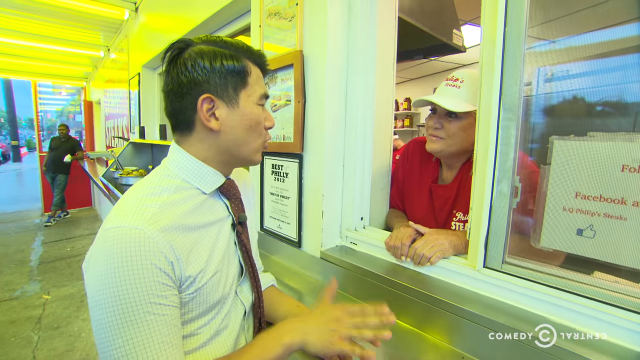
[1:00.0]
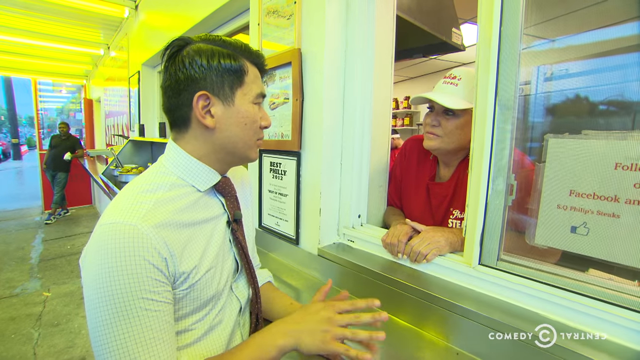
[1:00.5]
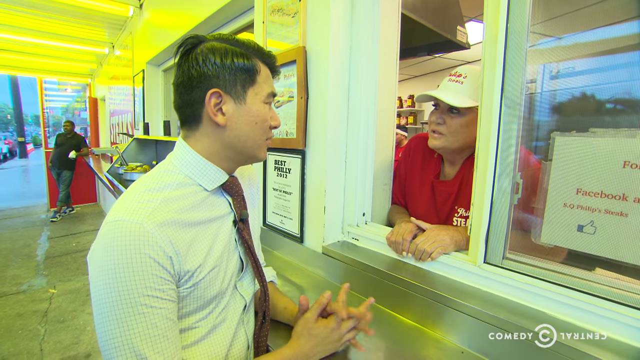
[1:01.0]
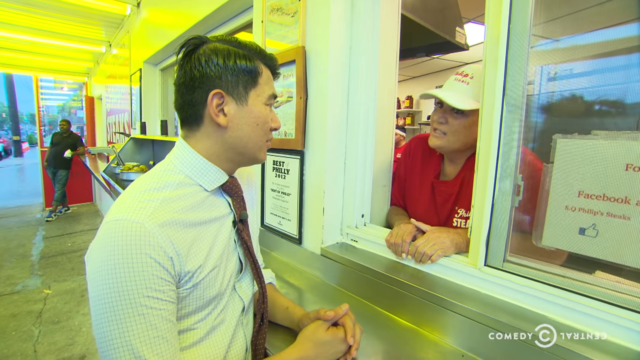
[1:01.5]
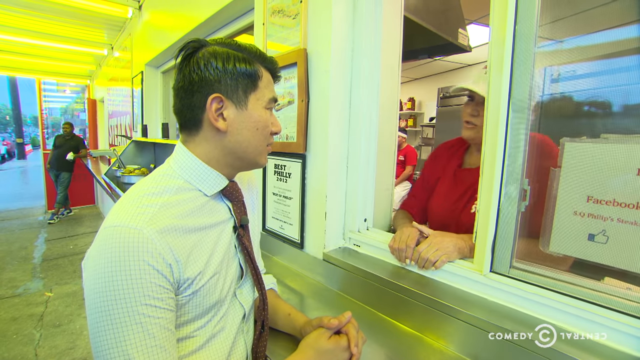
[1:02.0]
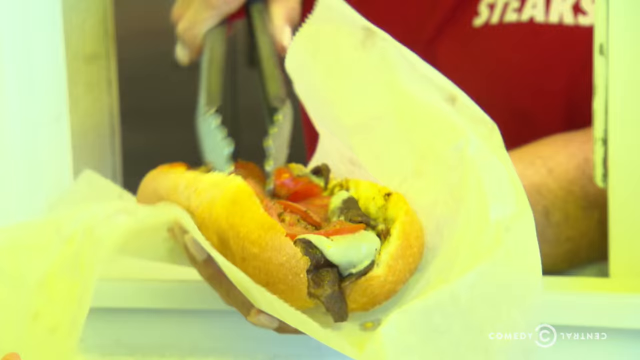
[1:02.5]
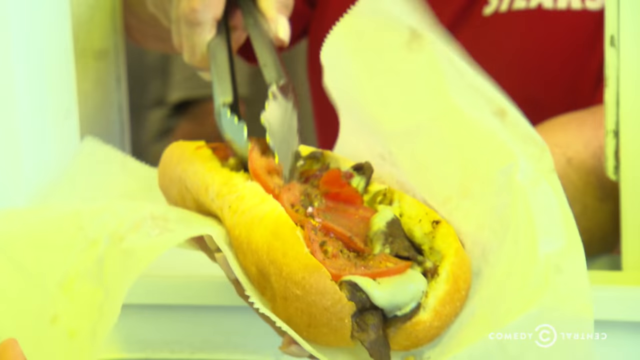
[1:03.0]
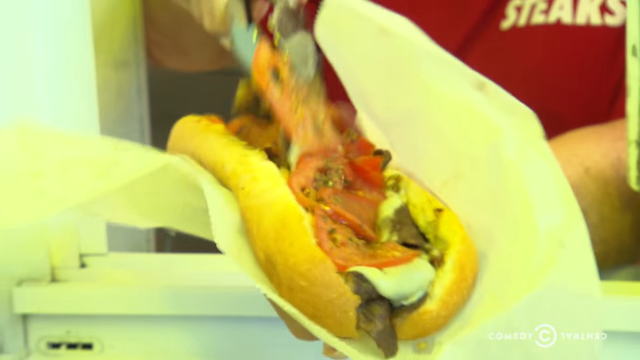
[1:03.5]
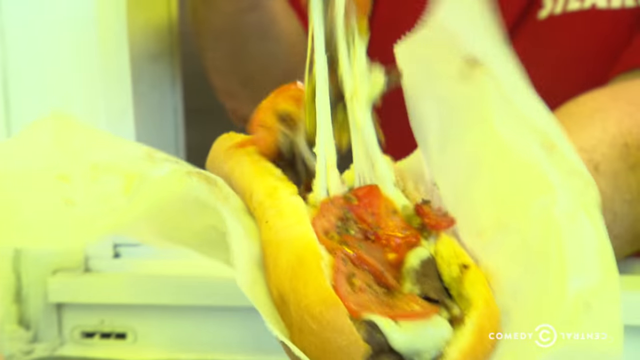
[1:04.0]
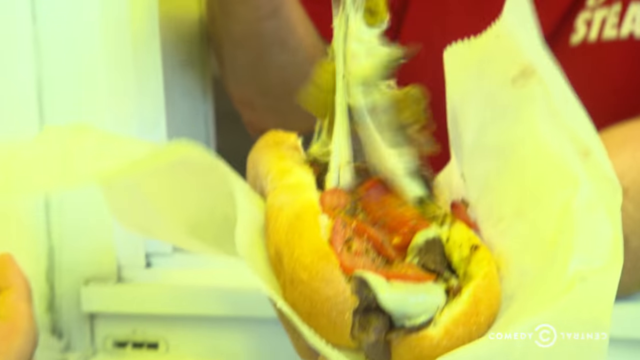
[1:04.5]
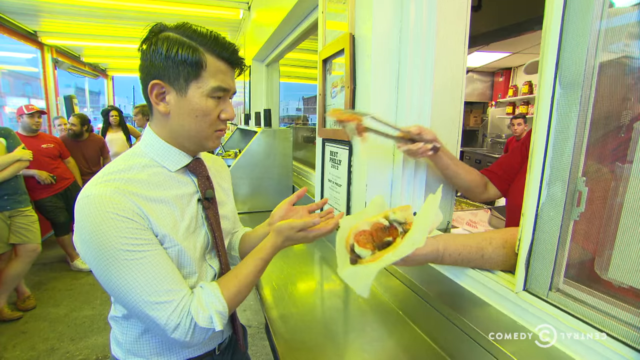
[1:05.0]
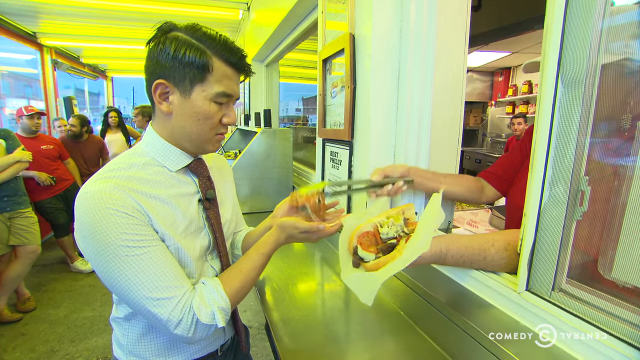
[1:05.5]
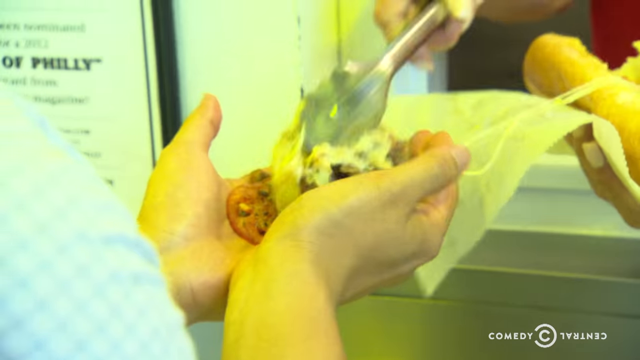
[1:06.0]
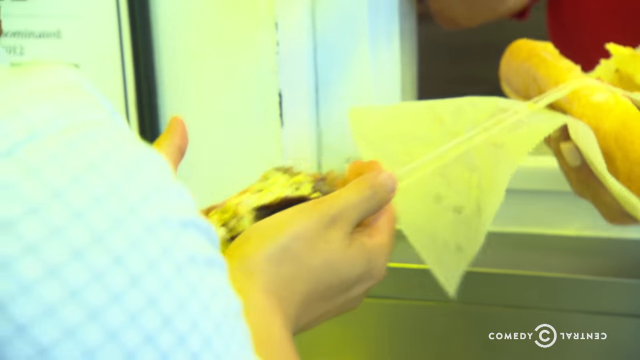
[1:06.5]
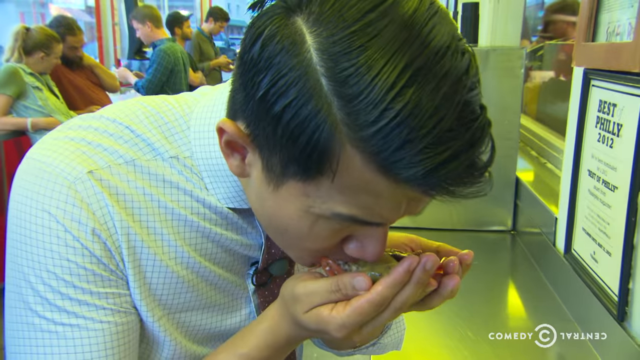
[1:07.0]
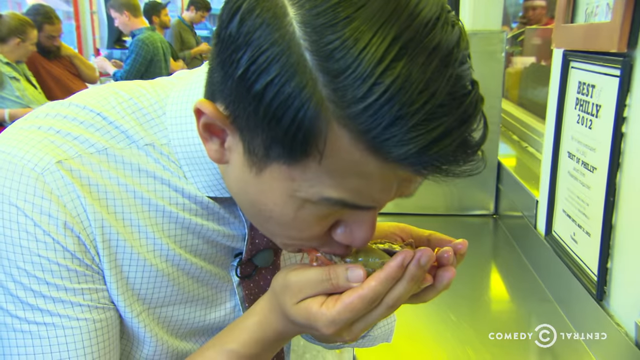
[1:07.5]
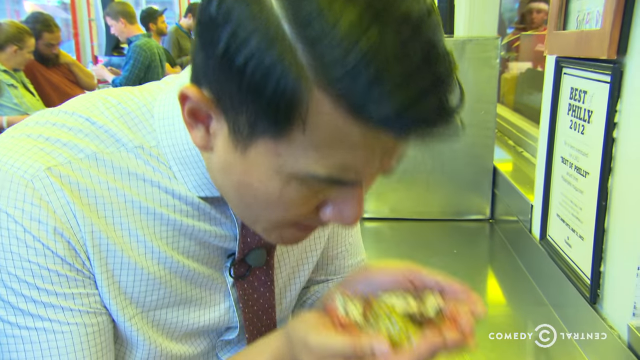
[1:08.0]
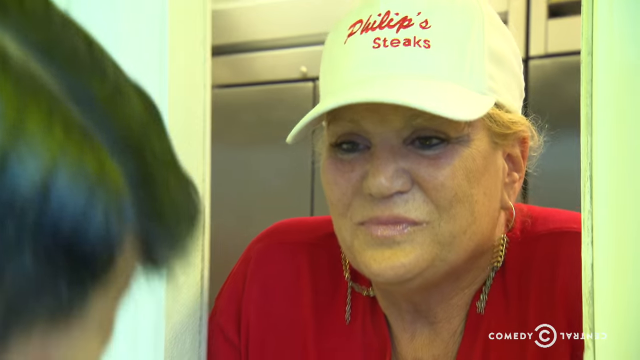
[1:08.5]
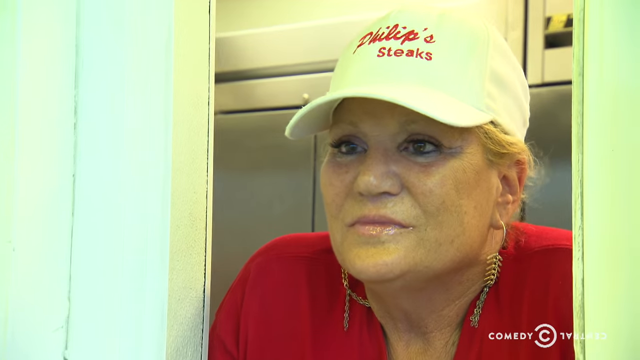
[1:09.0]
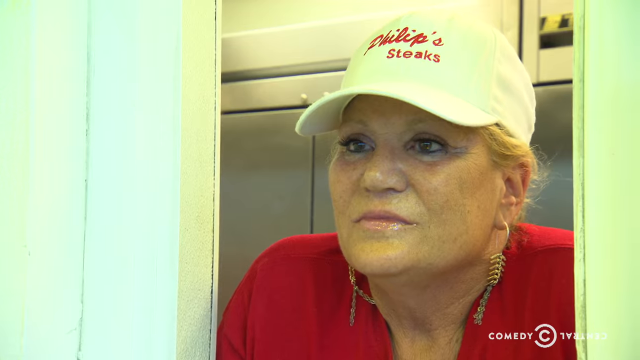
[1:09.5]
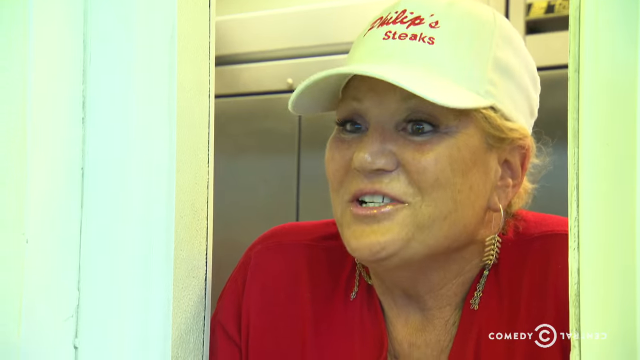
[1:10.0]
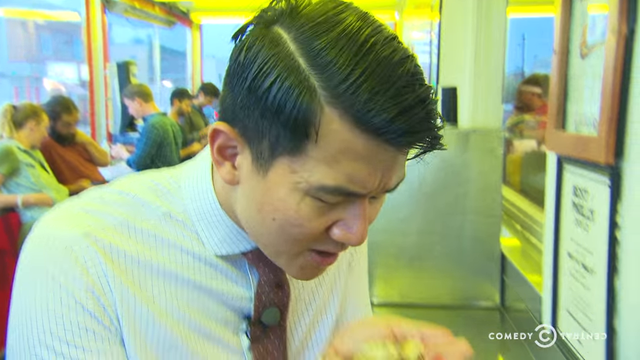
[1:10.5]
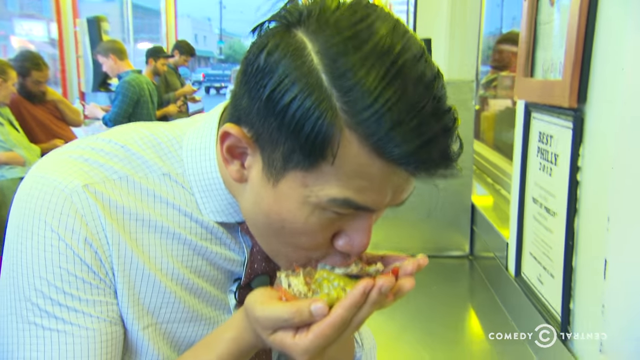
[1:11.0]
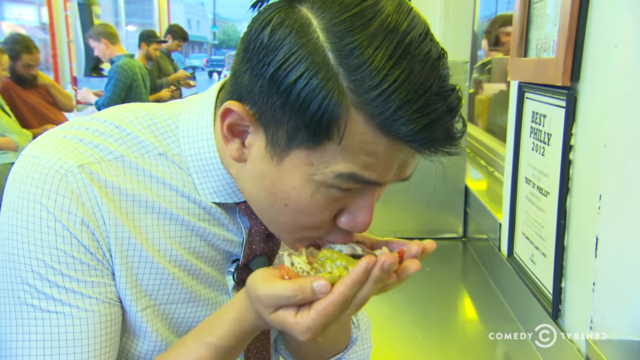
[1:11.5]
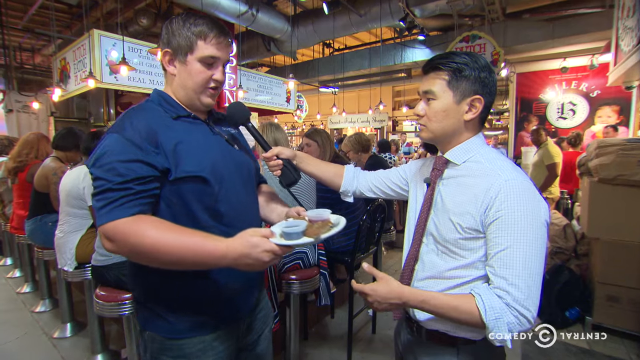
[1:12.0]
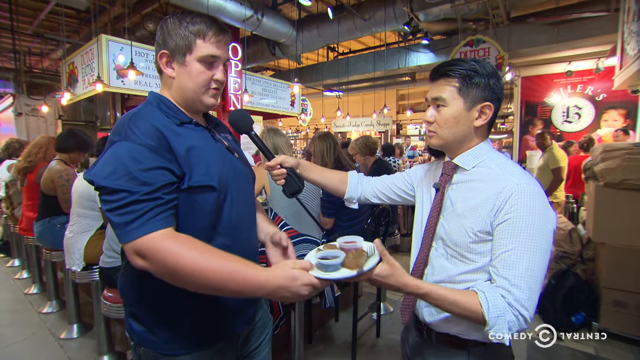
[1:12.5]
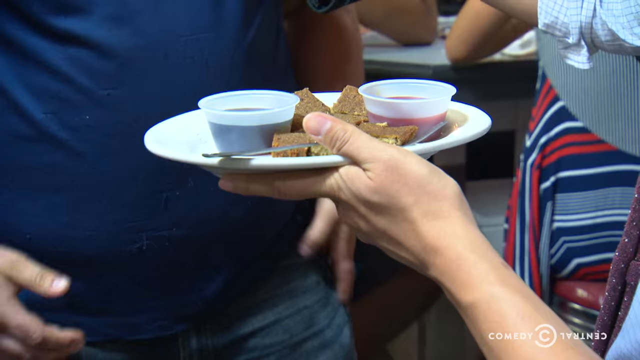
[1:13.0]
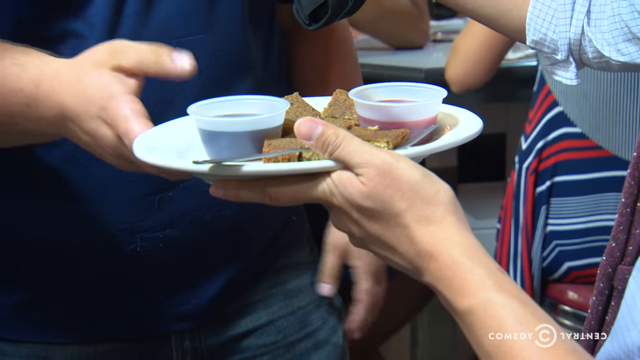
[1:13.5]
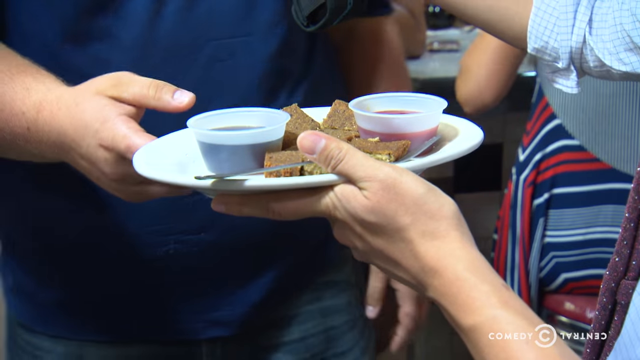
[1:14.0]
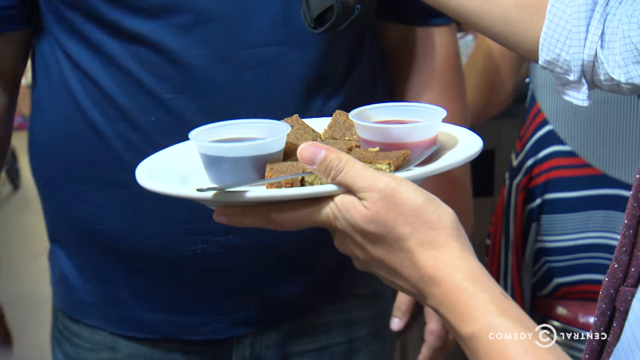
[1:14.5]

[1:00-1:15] An Asian man in his late 20s to early 30s, wearing a white button-down dress shirt with a tie and gray slacks, is at a food shack building, speaking to a woman through a square window. She wears a white hat that says "Philip Steaks" and a red shirt with the "Philip Steaks" logo over its left side. She hands him a hoagie with a bunch of meats in it, then picks meats out of the hoagie with tongs and puts them in the reporter's cupped hands, and he eats from his cupped hands. He is also in some sort of market busy with people milling about, talking to an obese man in a blue shirt who hands him a plate of food and talks into a microphone. They look like they are enjoying the conversation; the obese man looks happy, while the reporter looks pensive as he looks at the food.